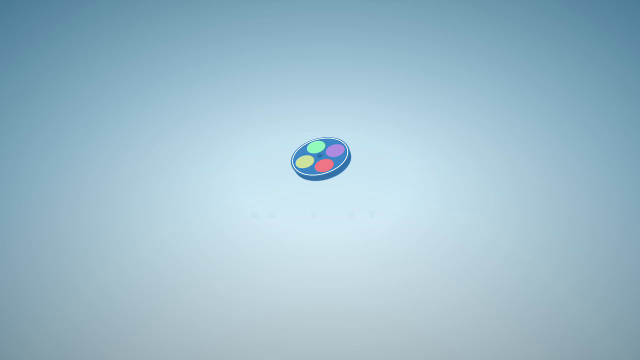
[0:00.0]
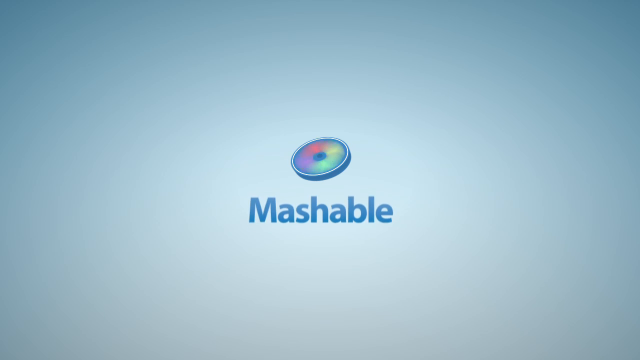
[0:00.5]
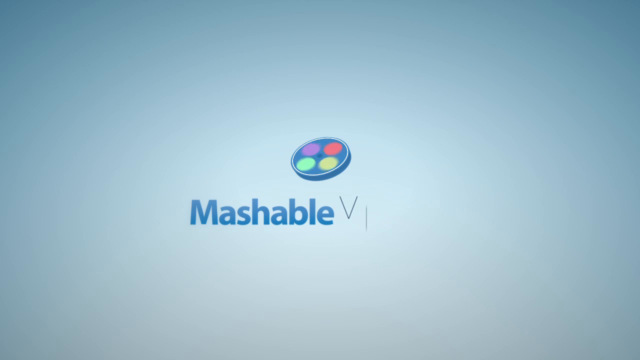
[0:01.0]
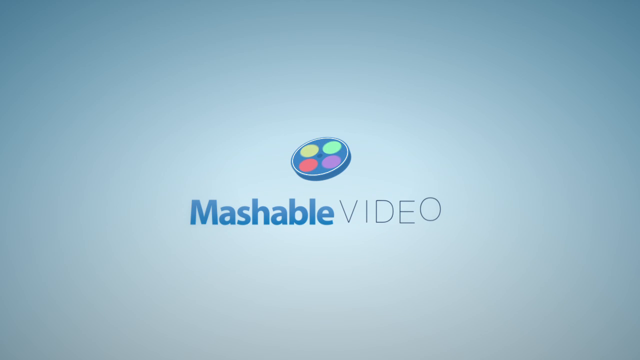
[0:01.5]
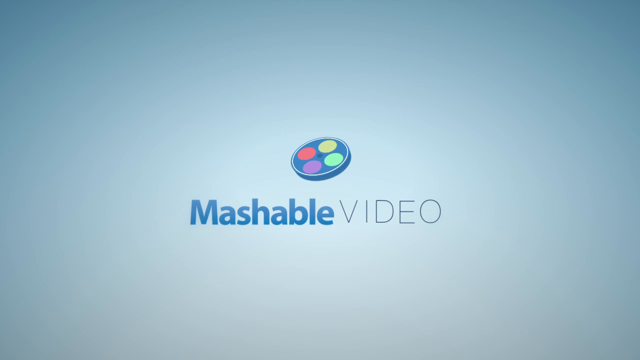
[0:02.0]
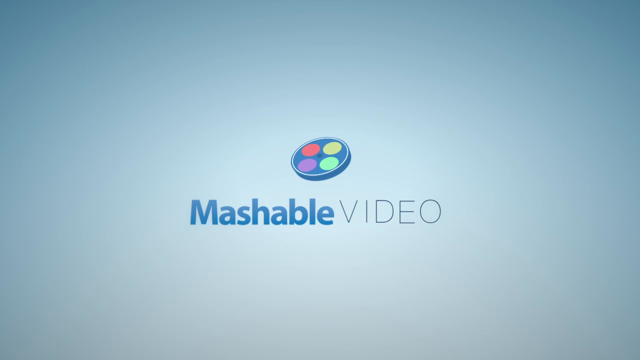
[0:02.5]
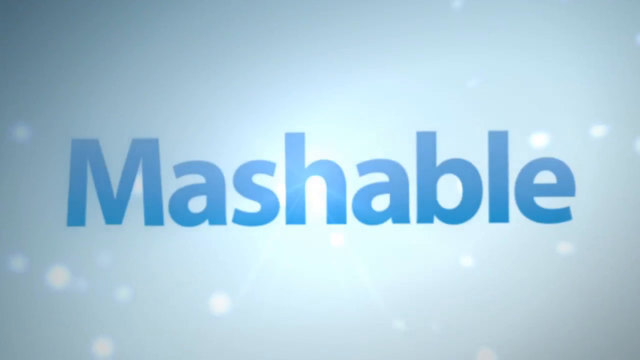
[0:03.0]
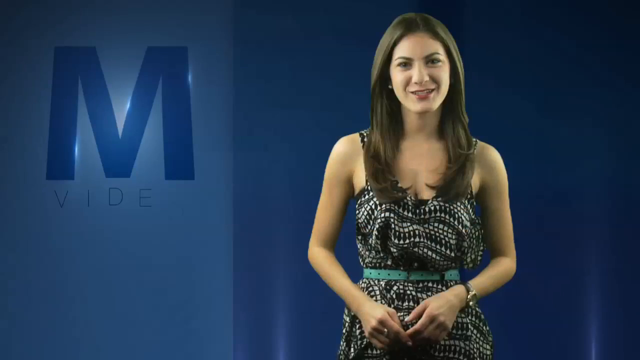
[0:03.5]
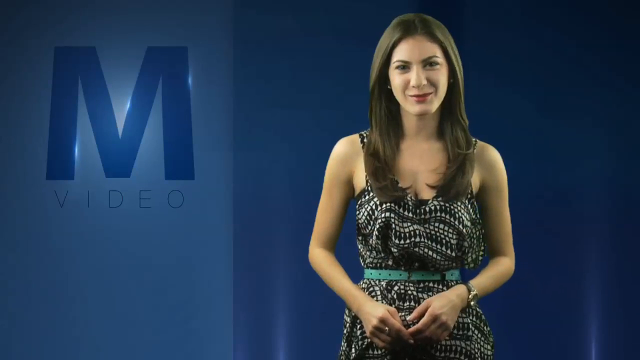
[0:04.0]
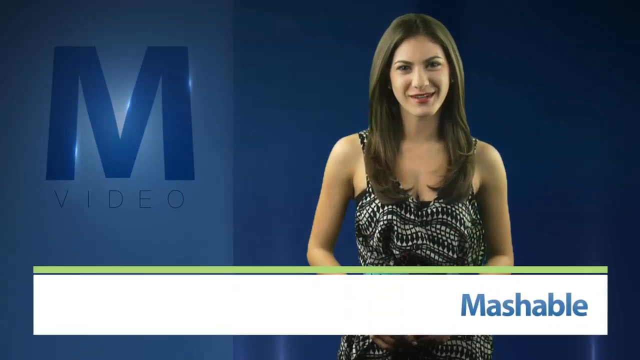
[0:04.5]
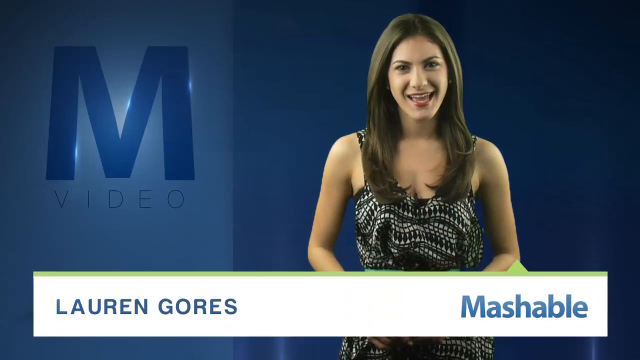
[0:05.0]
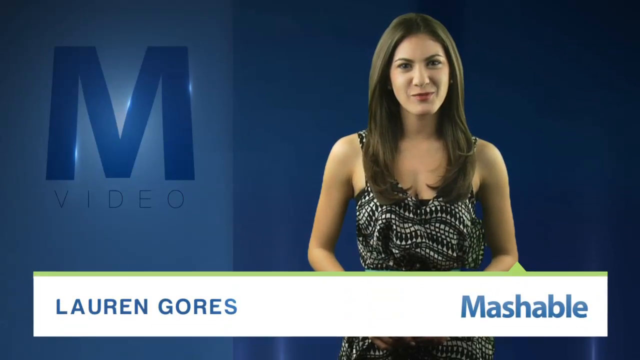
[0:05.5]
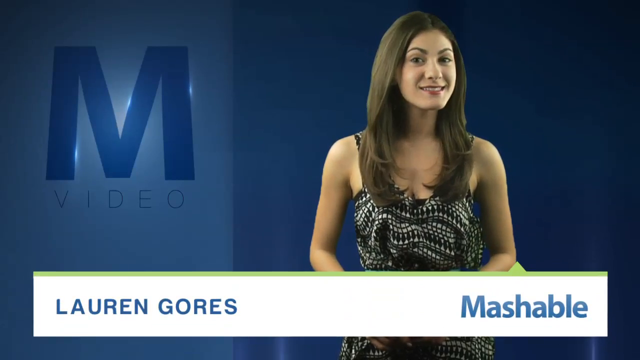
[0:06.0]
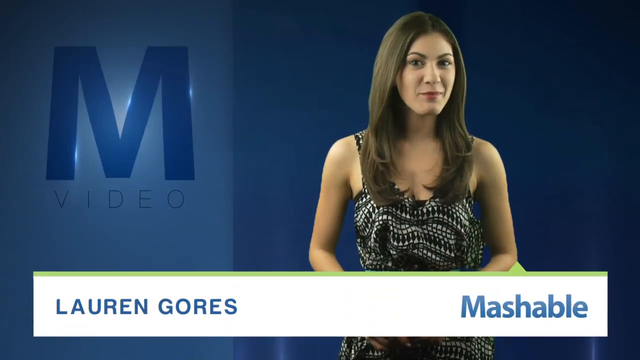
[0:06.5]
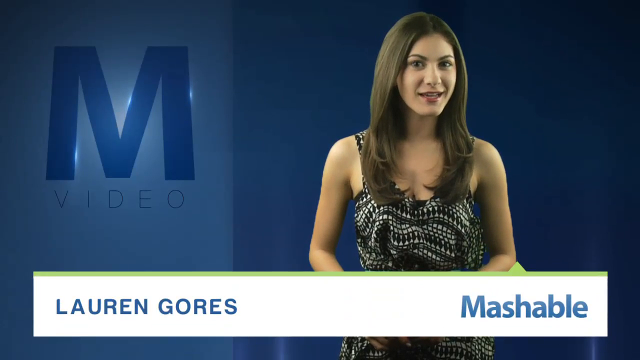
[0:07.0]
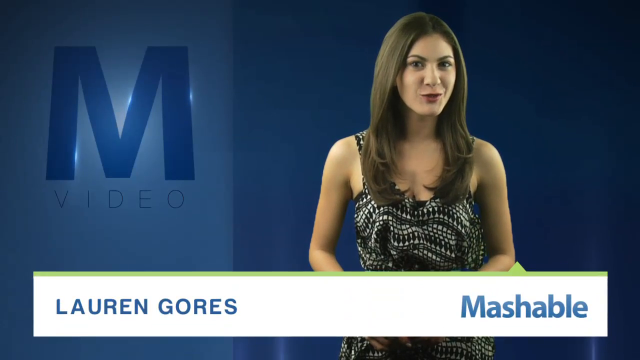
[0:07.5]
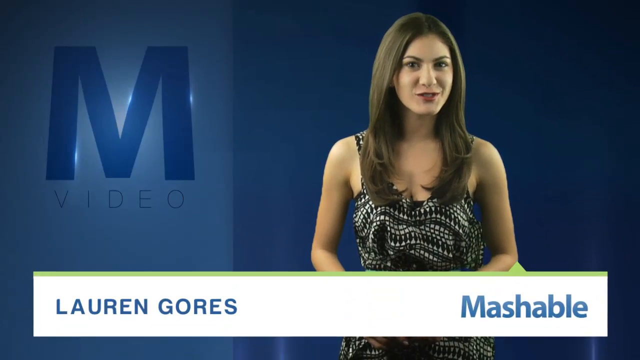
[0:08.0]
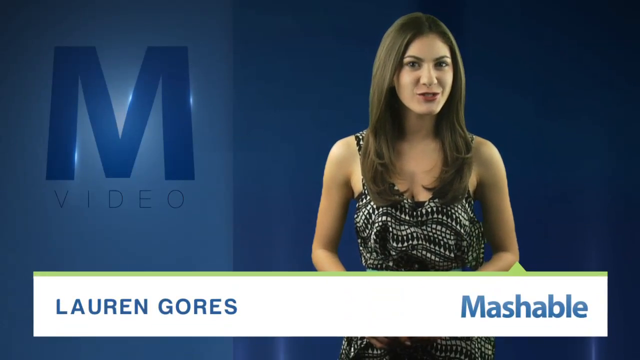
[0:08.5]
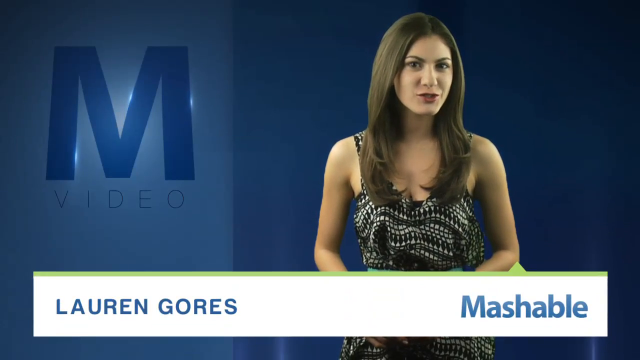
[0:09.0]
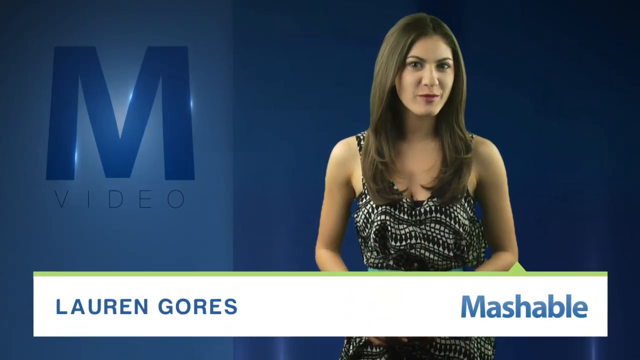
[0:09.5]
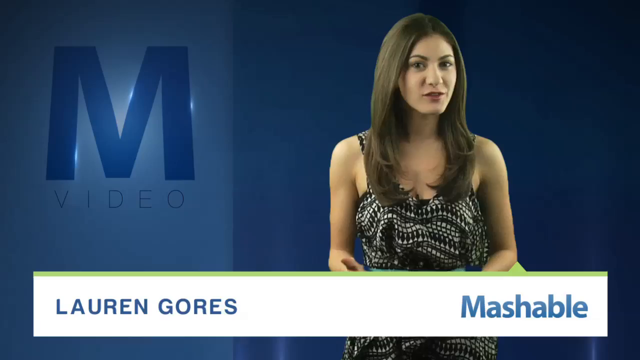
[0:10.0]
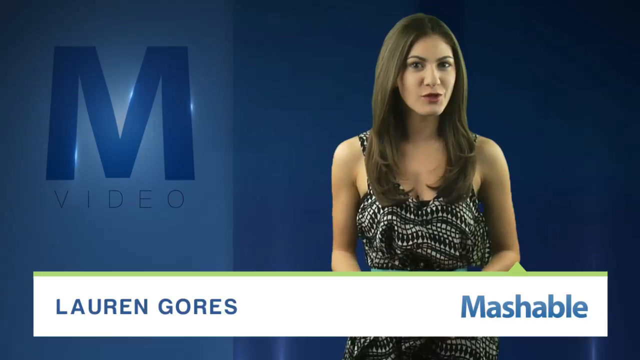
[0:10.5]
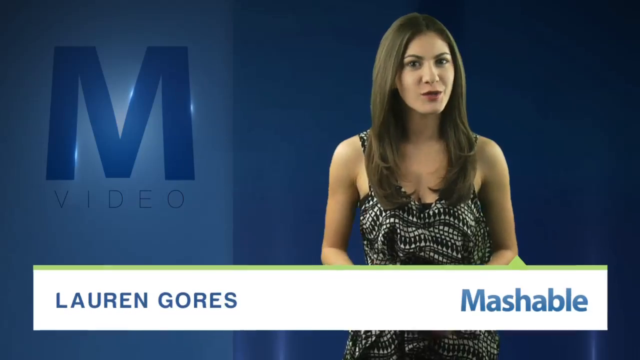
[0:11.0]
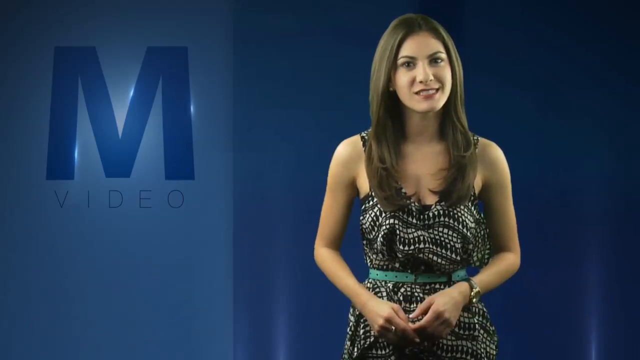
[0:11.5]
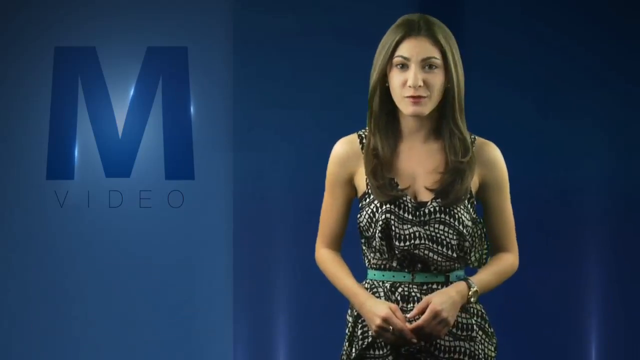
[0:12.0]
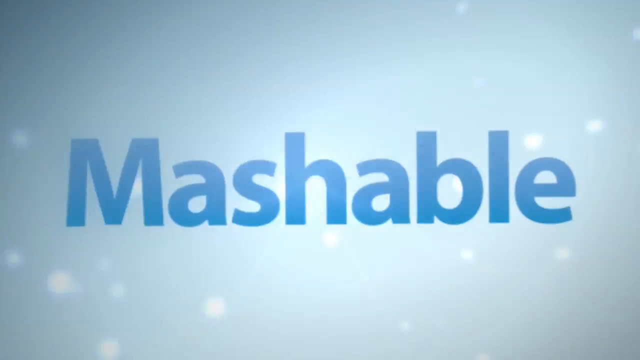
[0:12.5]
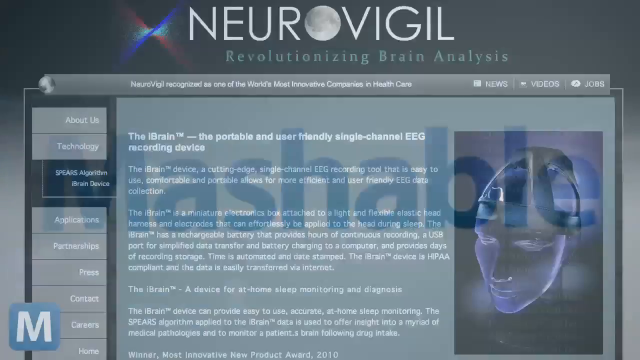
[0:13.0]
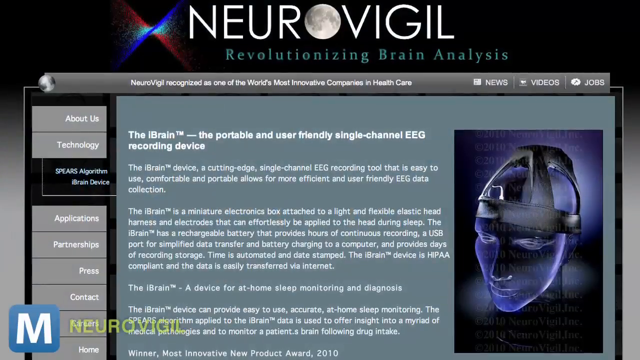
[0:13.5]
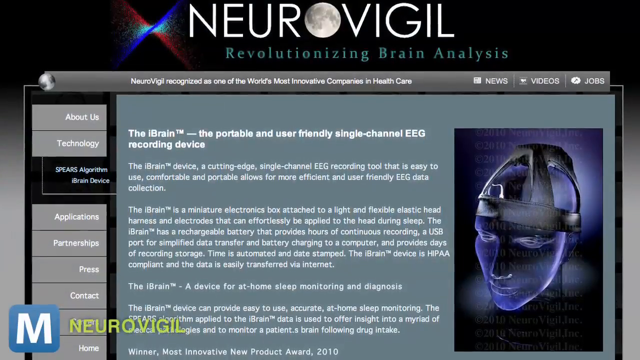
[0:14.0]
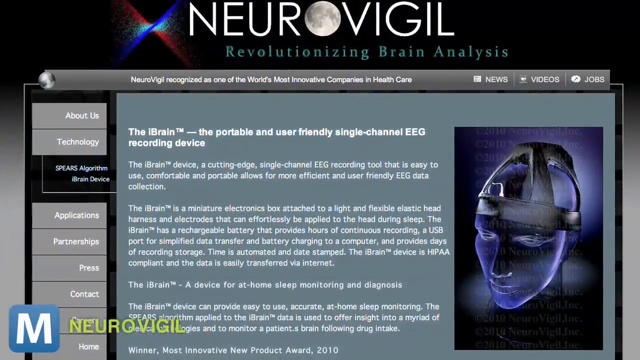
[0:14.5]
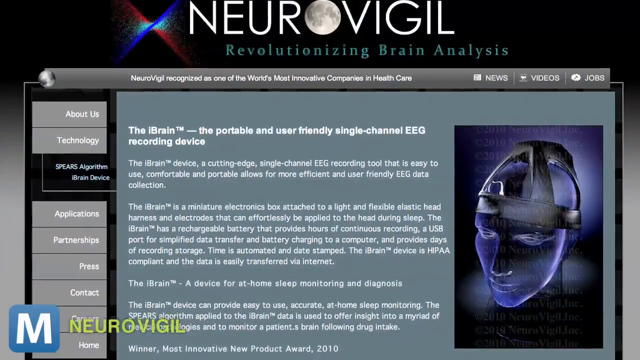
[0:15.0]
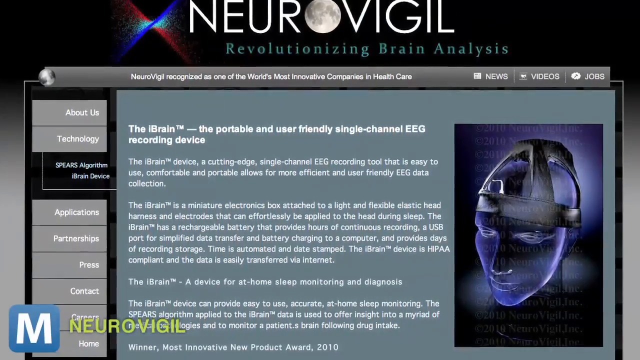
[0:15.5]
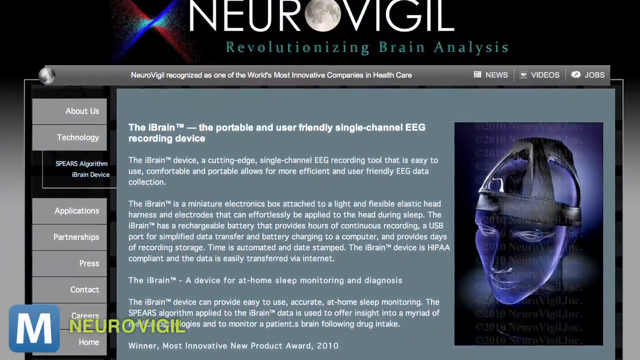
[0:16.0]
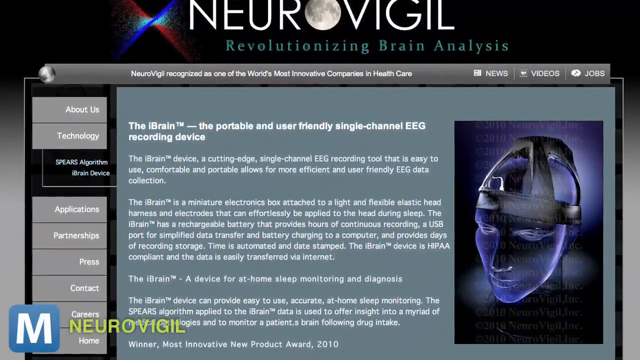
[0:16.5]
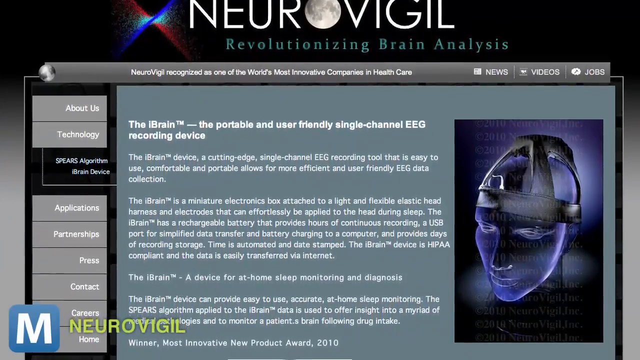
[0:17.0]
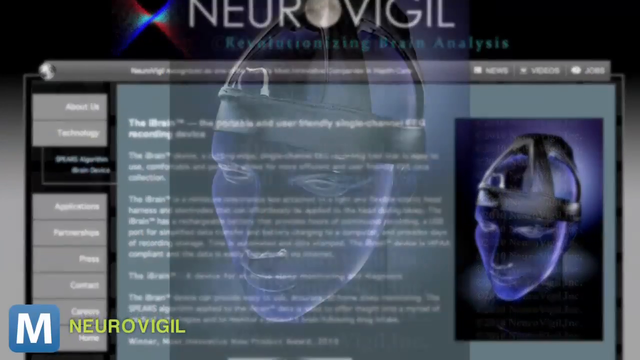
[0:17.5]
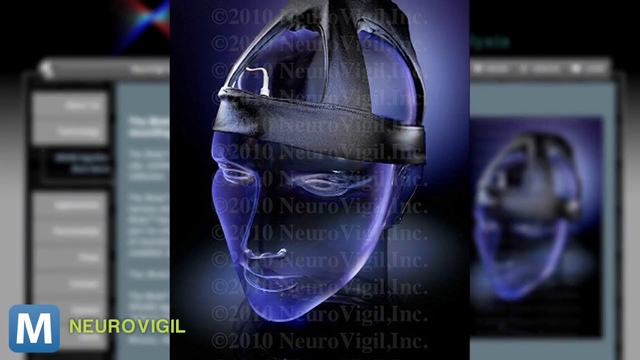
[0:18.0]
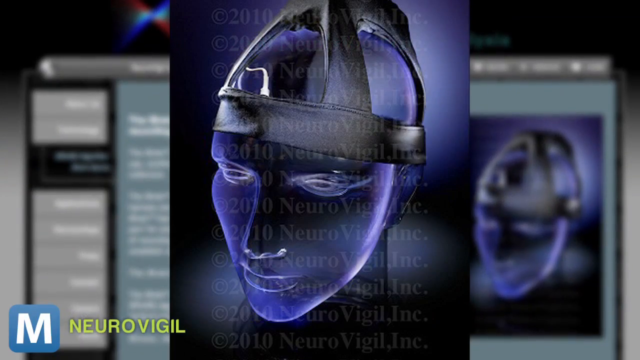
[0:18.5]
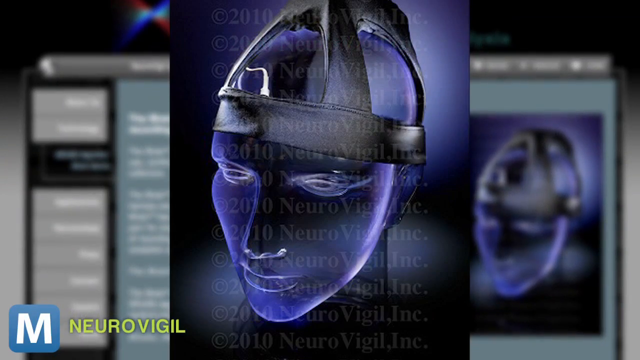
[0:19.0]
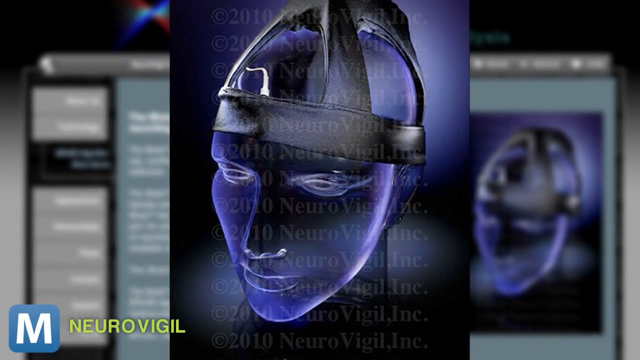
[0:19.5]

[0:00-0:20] The video opens on a logo: a blue disc with four colored circles on it, green, purple, yellow and red, angled slightly away from the camera. The disc begins to spin, and the words "Mashable Video" pop in beneath it, "Mashable" in a bold blue font and "Video" in a thin gray font. The screen then cuts to a woman standing in front of a dark blue background. On the left-hand side of the background is a lighter blue rectangle with a dark blue "M" and the word "VIDEO" under it. At the bottom of the screen is a white box with a green top outline that says "Lauren Gores" on the left in gray font and "Mashable" on the right in blue font. The woman, shot from about the waist up, wears some sort of frilly shirt and has long brown hair. She looks into the camera and speaks for several seconds. Her nameplate then disappears and the screen switches to a website called NeuroVigil, "revolutionizing brain analysis." The website is mostly dark grays and blacks, and its most prominent feature is an advertisement for the iBrain, "the portable and user-friendly single-channel EEG recording device." One image from the website gets enlarged: a blue head wearing a strange leather strap-based hat.